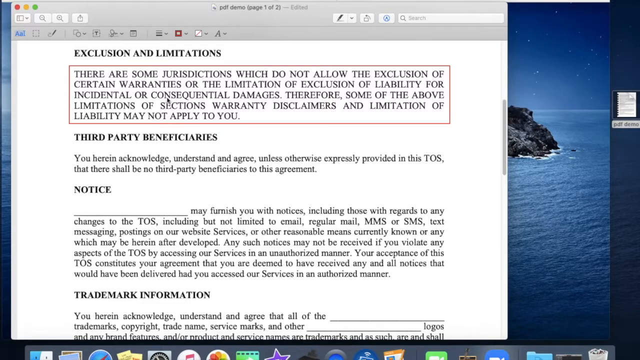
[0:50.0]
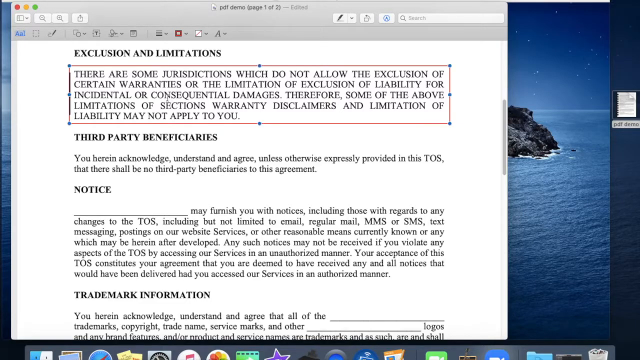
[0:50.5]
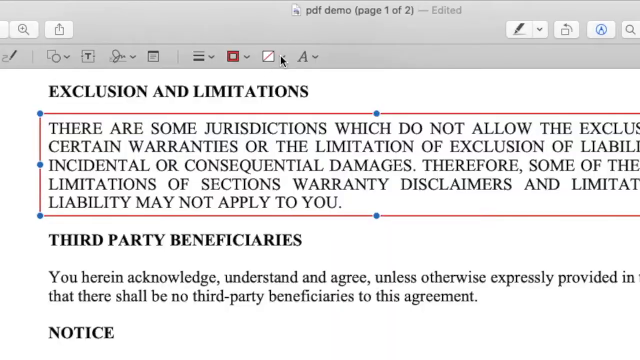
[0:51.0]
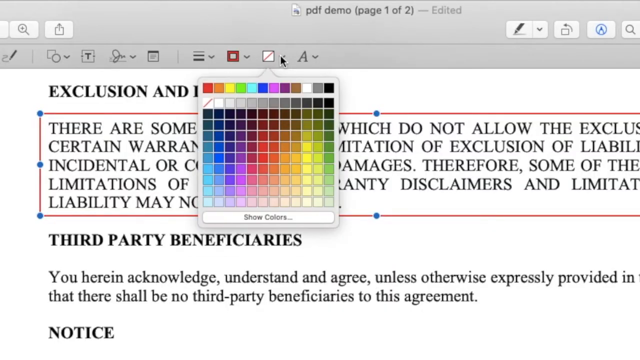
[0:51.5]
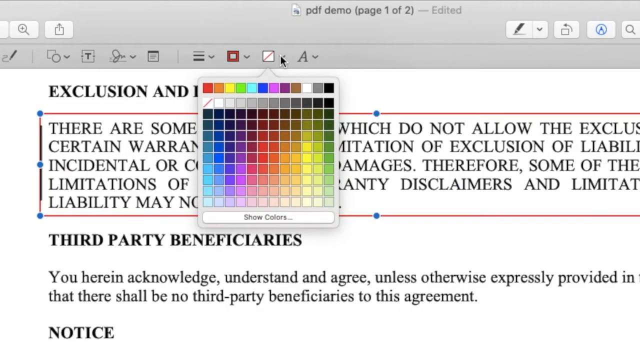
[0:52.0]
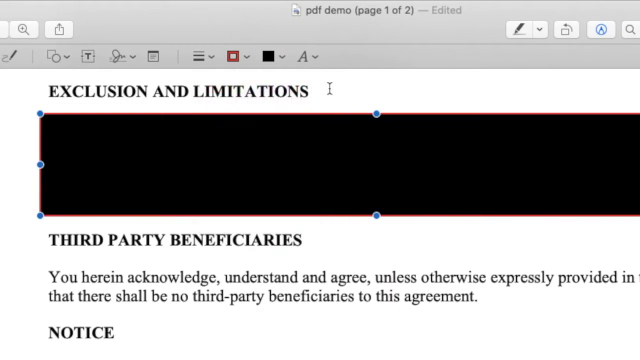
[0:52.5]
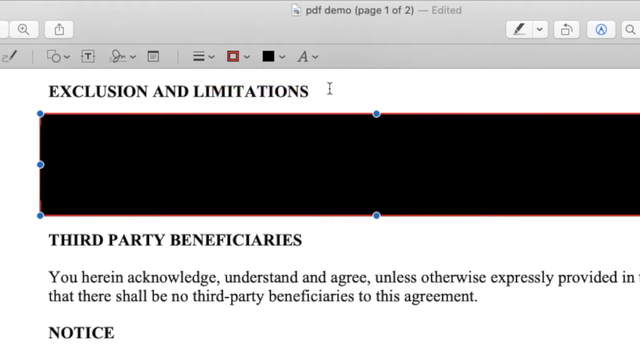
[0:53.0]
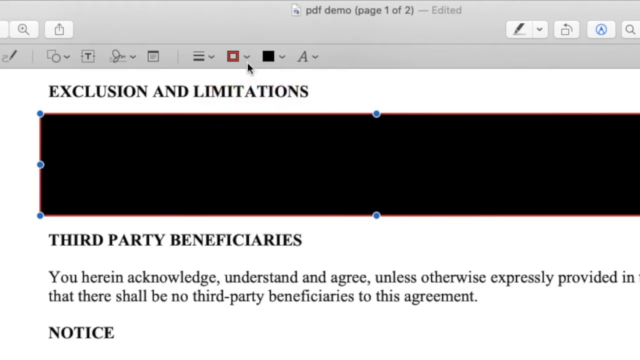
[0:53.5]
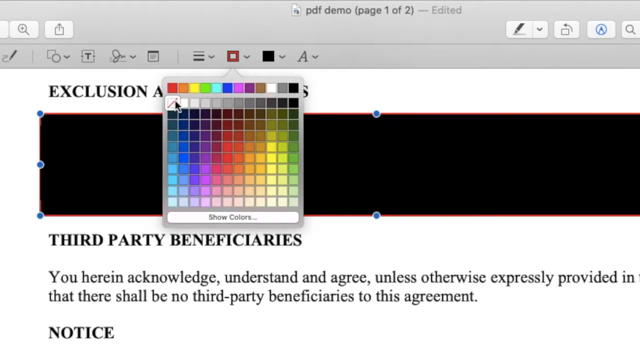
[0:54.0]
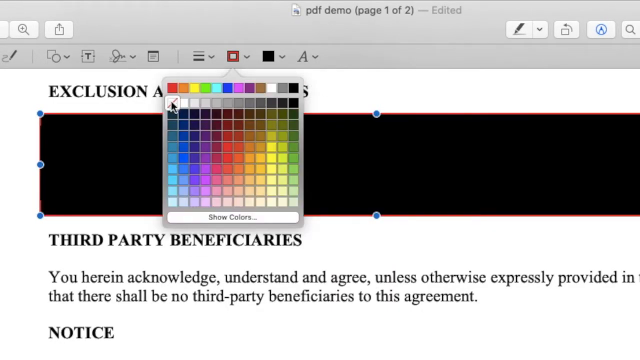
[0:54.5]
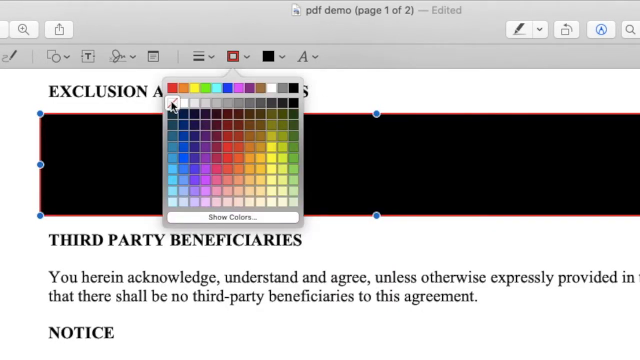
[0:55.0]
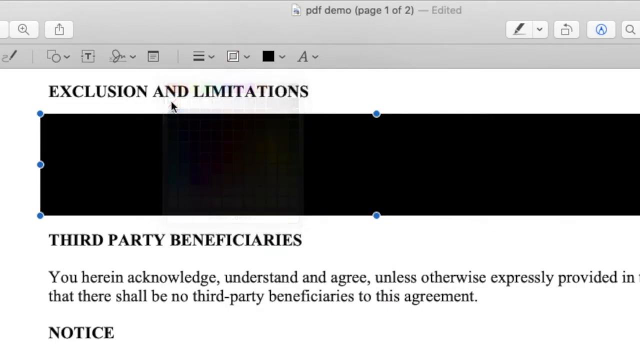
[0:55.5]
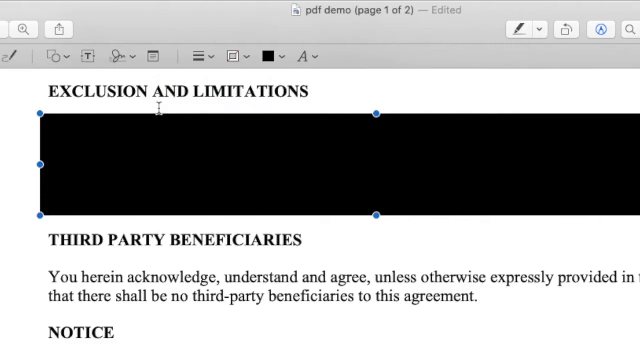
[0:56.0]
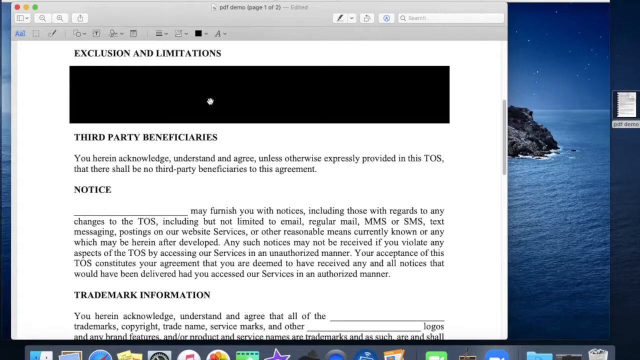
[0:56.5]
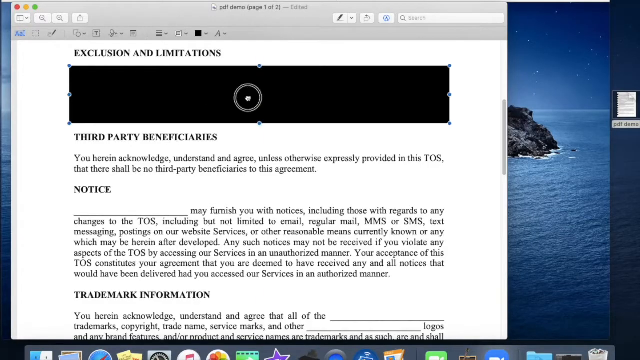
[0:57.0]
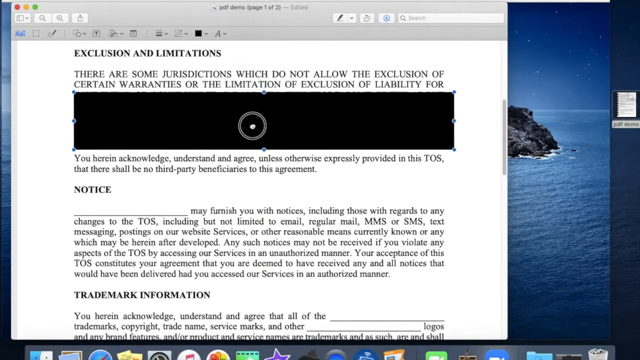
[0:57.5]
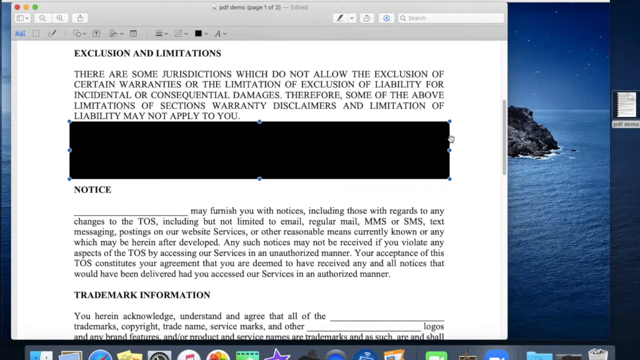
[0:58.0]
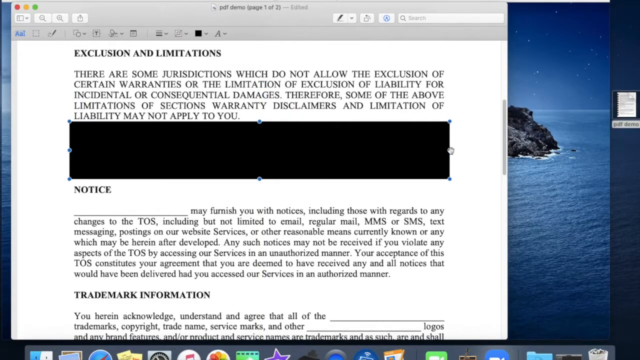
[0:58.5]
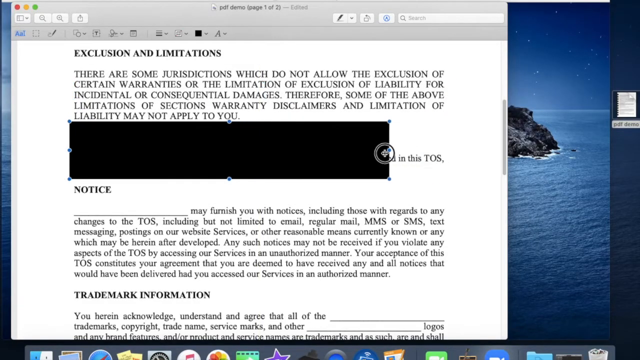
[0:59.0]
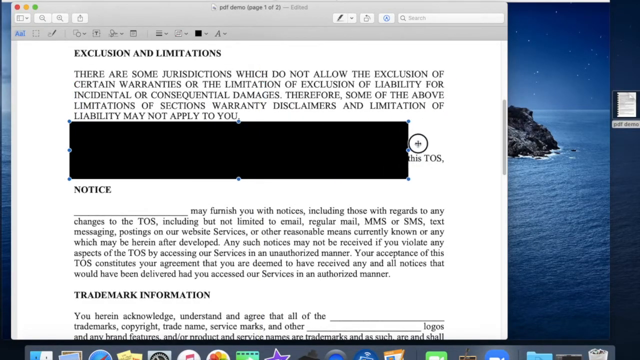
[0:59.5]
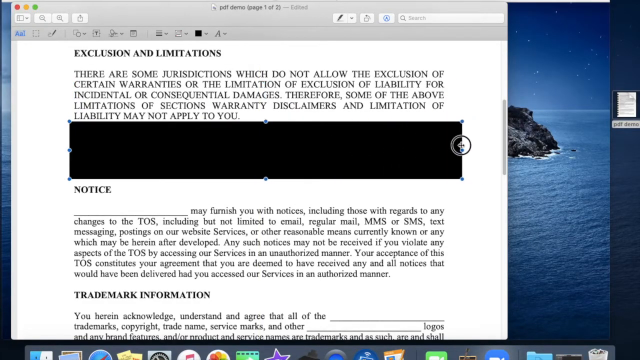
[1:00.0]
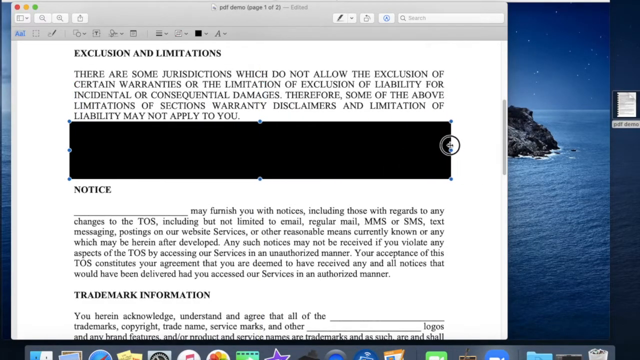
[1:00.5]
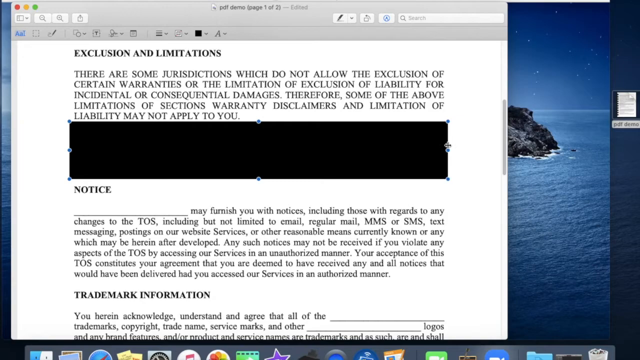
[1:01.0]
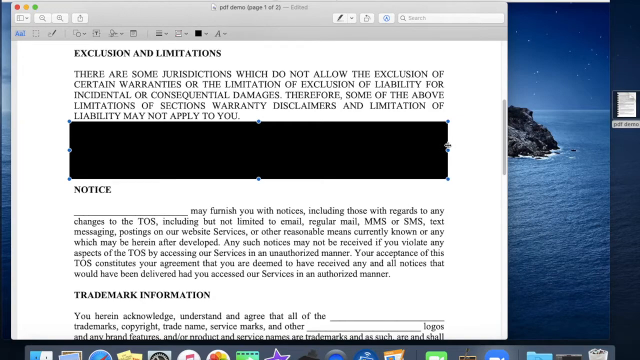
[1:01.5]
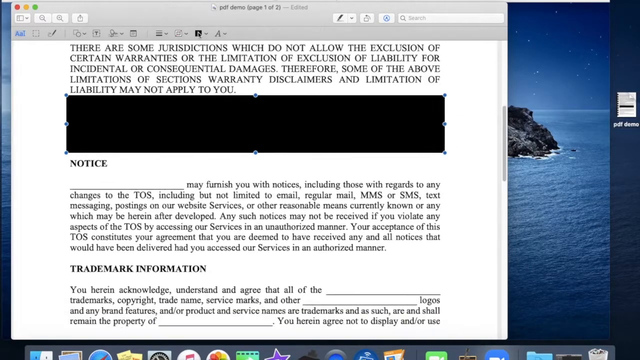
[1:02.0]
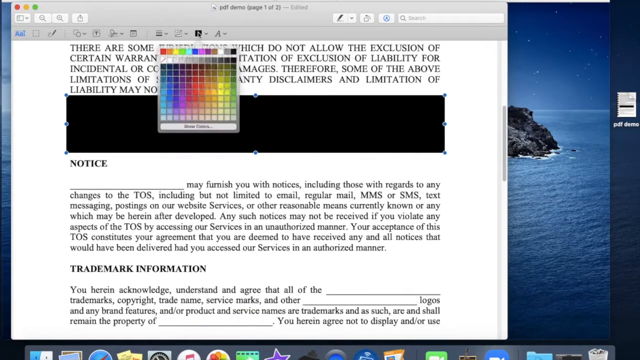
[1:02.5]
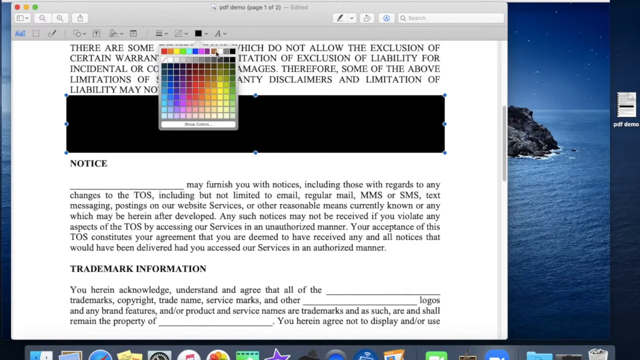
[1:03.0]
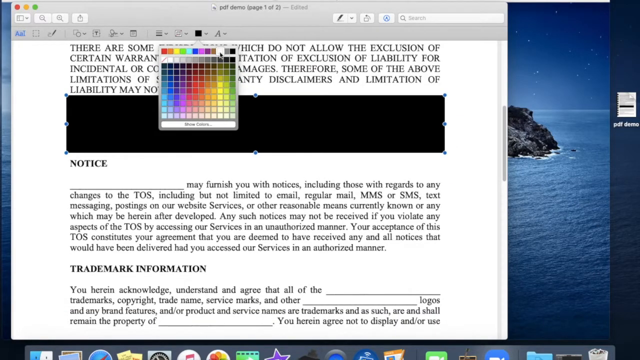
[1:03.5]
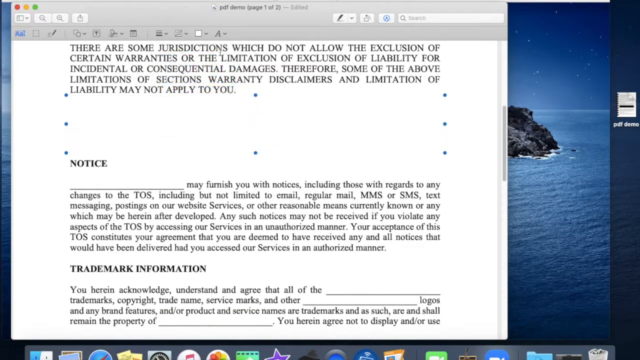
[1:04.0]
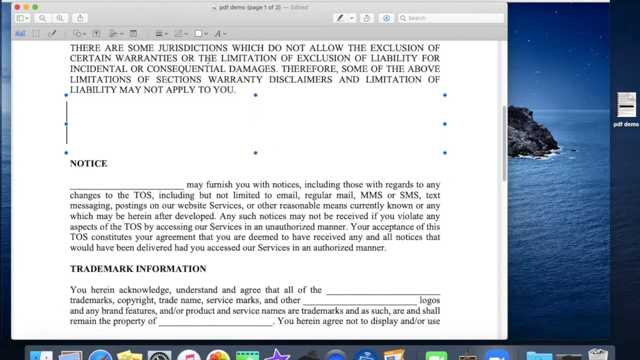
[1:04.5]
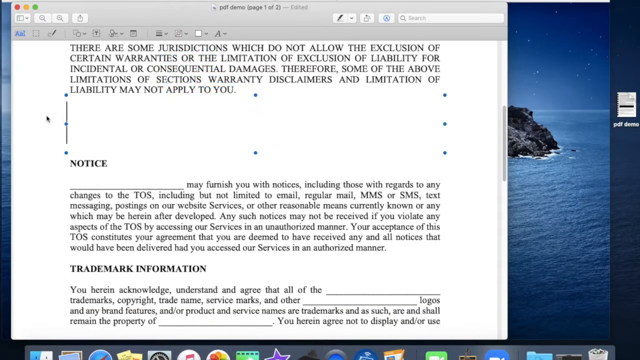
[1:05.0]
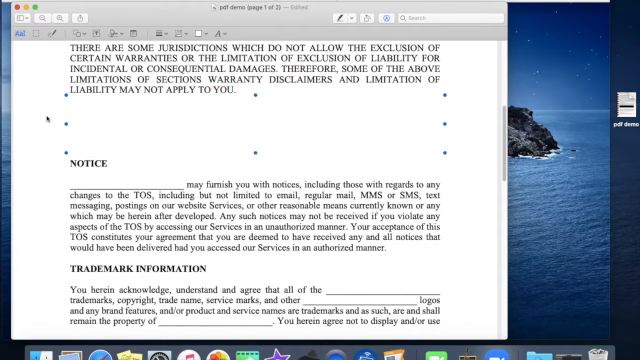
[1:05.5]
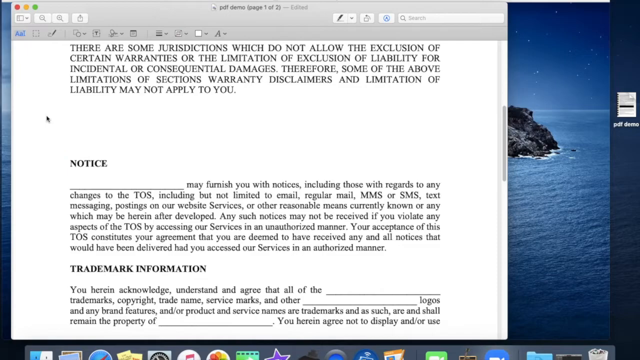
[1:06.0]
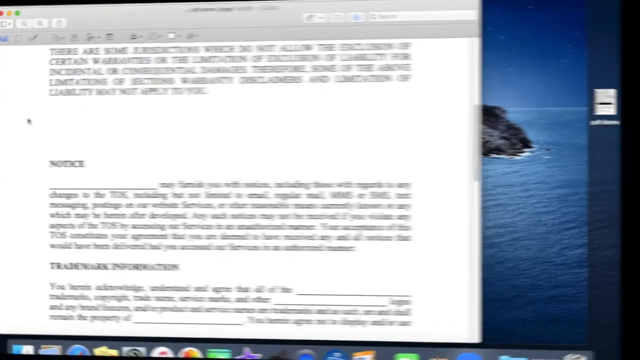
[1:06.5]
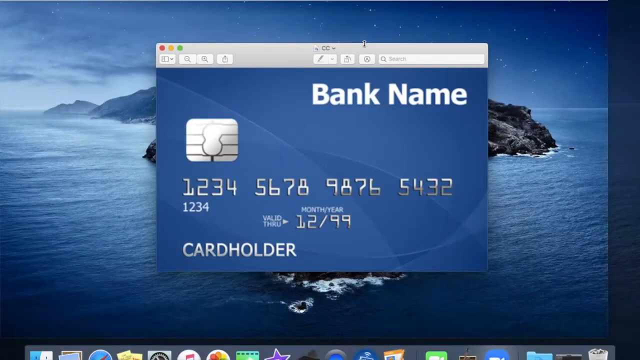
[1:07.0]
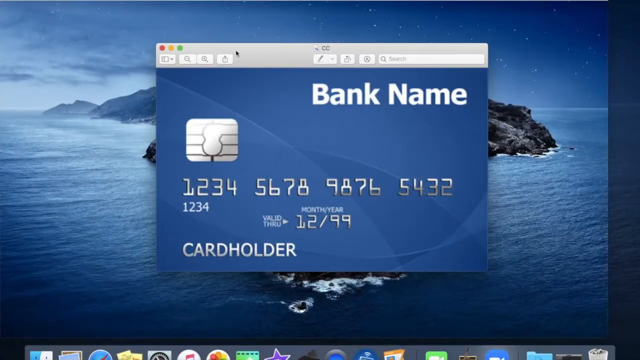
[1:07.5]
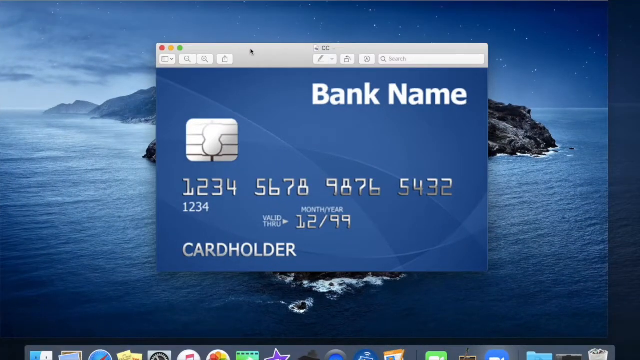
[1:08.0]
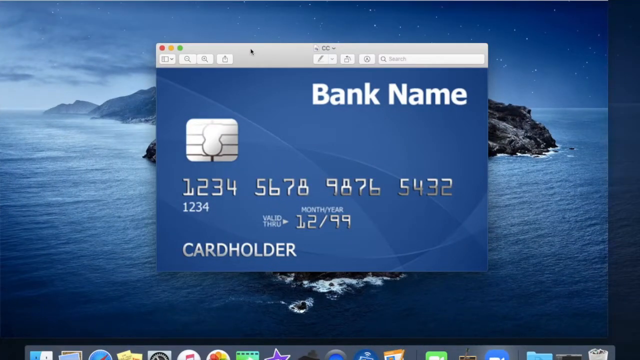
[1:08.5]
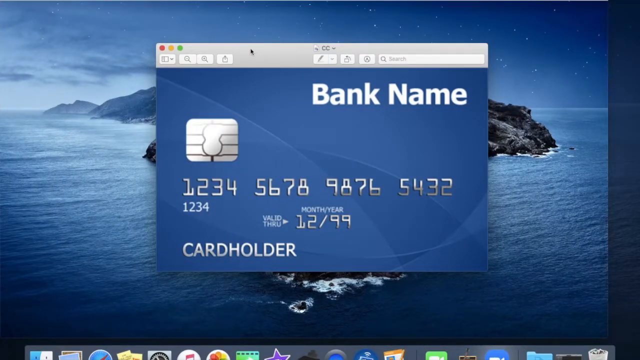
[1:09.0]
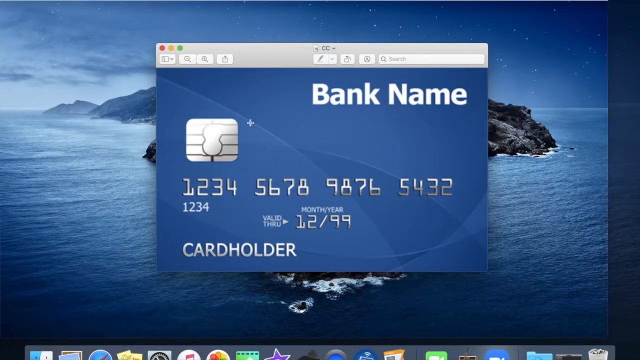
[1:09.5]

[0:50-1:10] A laptop or computer screen shows a Windows-type application with a PDF of a word-processing document open. The title at the top is "exclusion and limitations", and the first paragraph is highlighted in a red text box. A cursor moves around the screen, pointing at different icons at the top. It clicks an icon that changes the ink font colour, changing the inside of the text box to black. The text box is then shrunk by clicking and holding its right-hand line and dragging it backwards and forwards. The cursor goes to the icon that changes the background colour and this time changes the text box's background to white. The screen then changes to another page that looks like the front of a blue credit card, with the words "bank name", an icon of a silicon chip, some numbers, the expiry date and a place for the cardholder's name.